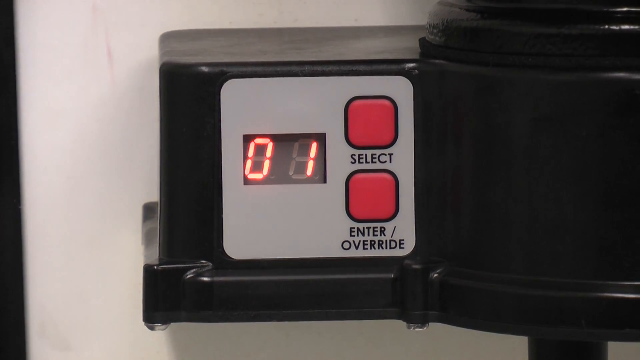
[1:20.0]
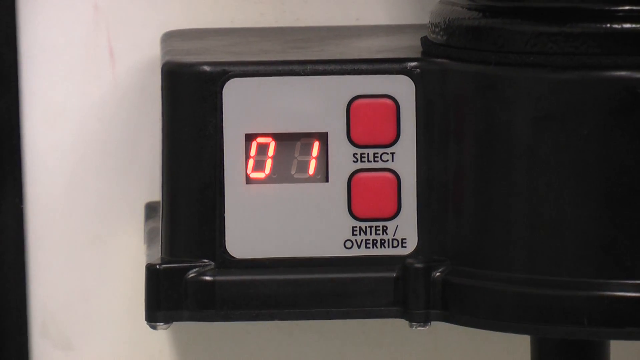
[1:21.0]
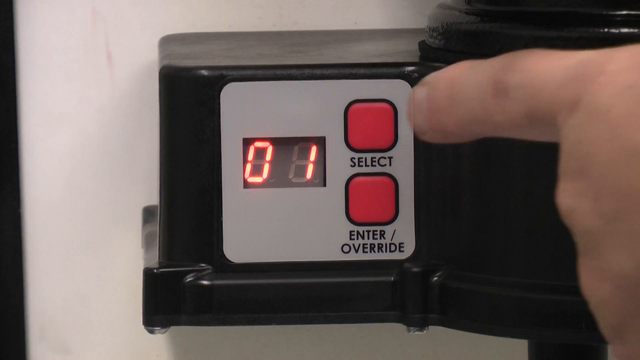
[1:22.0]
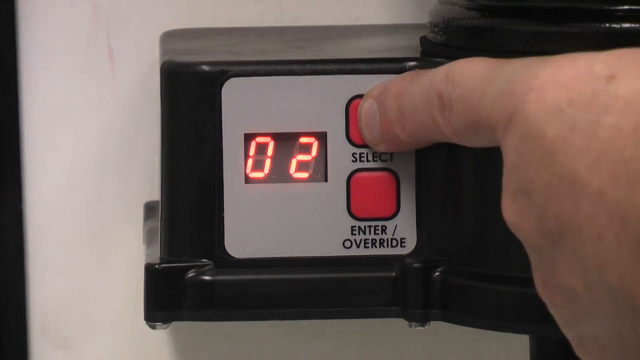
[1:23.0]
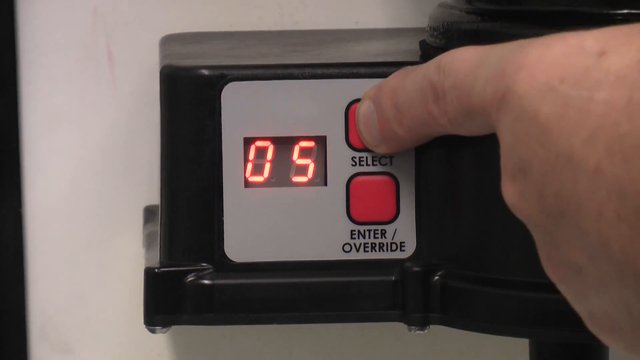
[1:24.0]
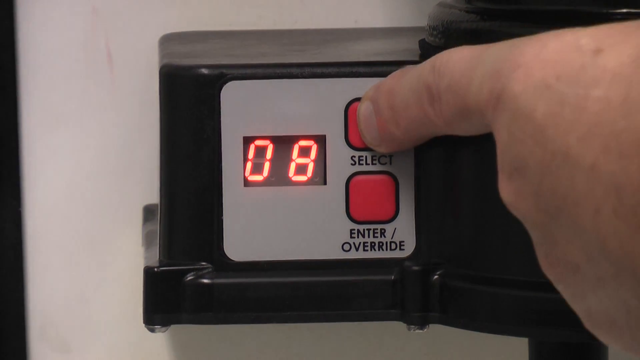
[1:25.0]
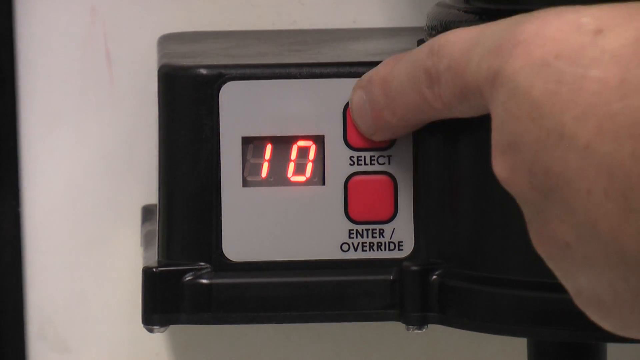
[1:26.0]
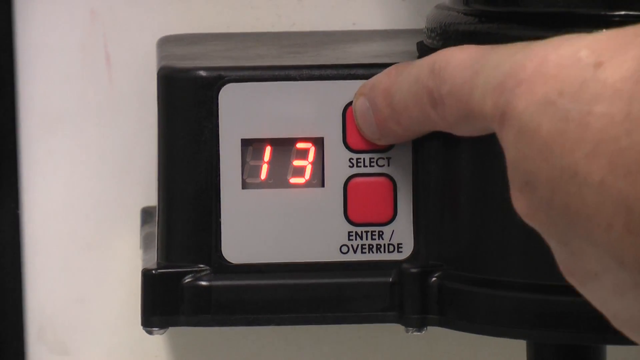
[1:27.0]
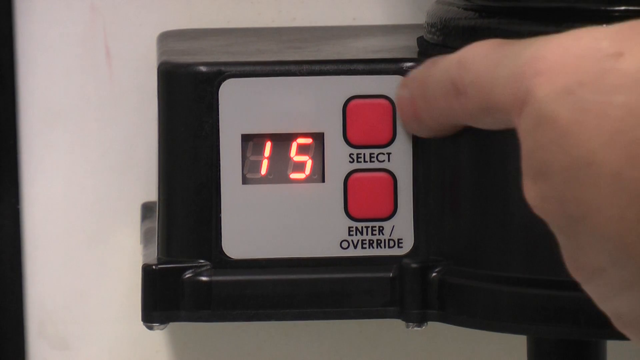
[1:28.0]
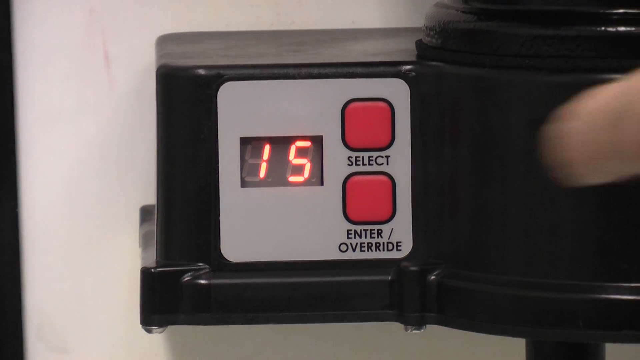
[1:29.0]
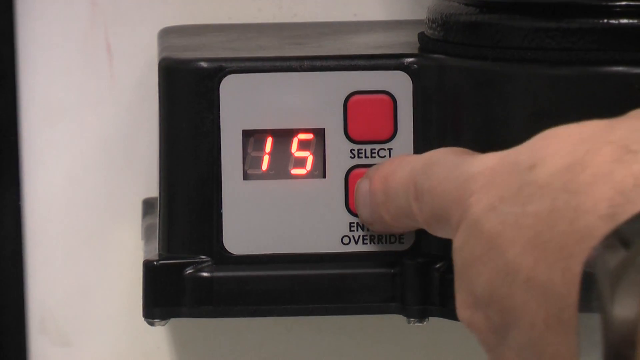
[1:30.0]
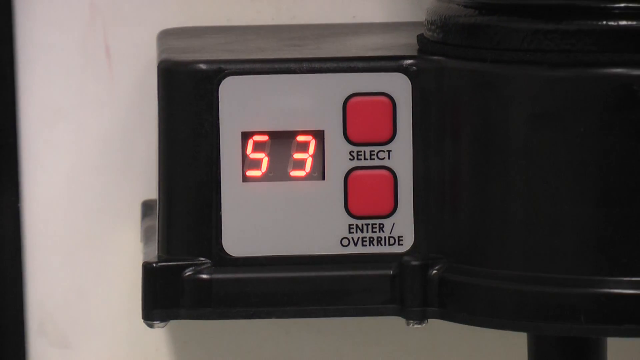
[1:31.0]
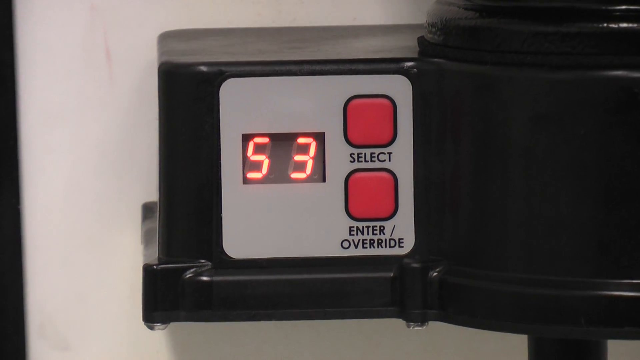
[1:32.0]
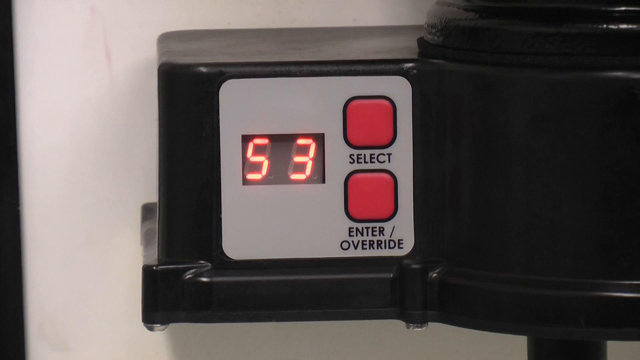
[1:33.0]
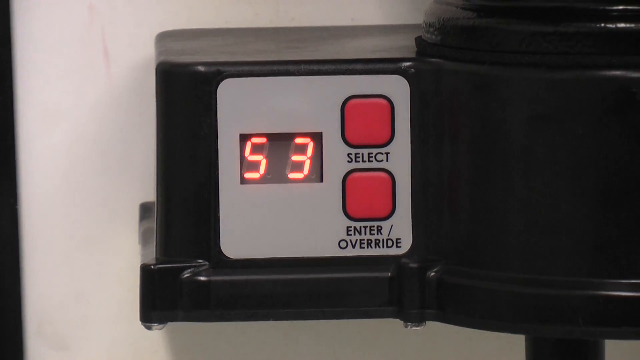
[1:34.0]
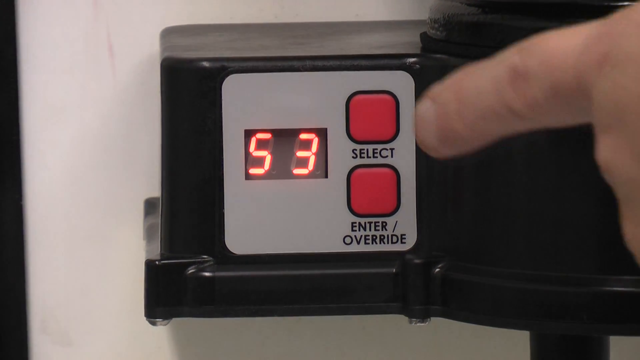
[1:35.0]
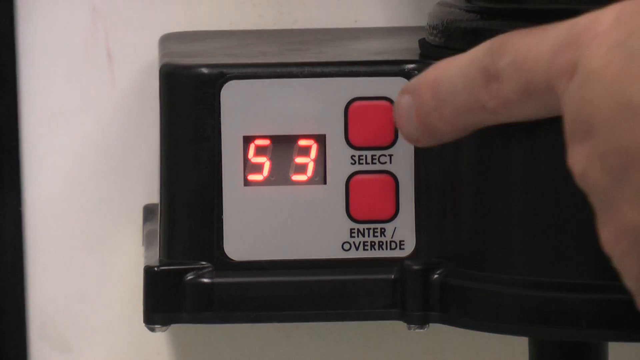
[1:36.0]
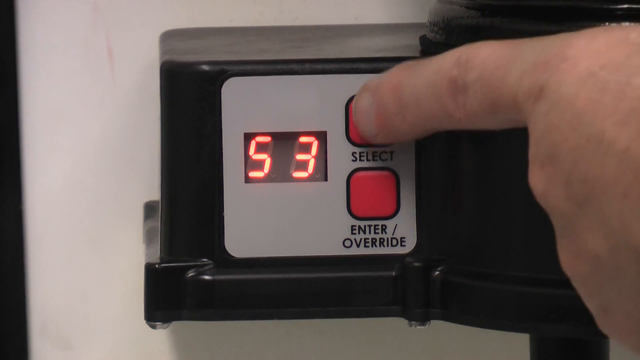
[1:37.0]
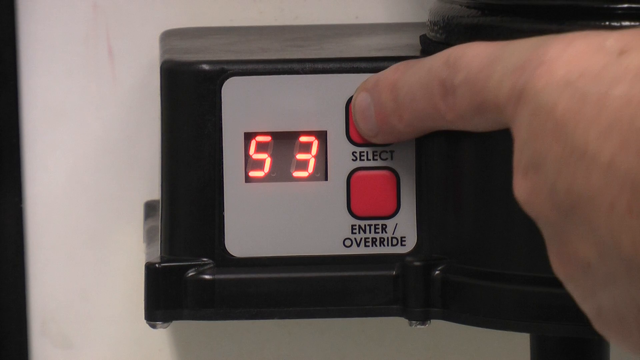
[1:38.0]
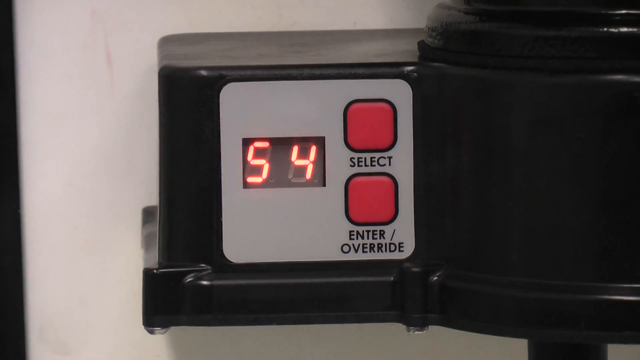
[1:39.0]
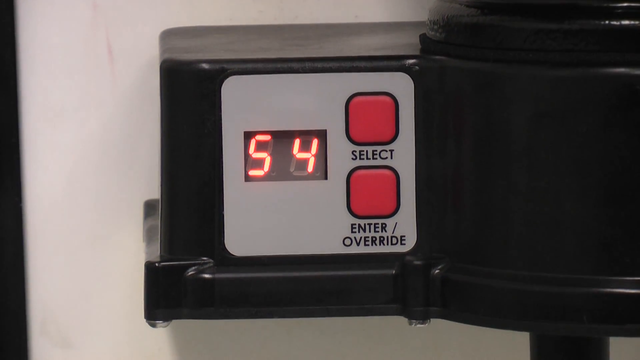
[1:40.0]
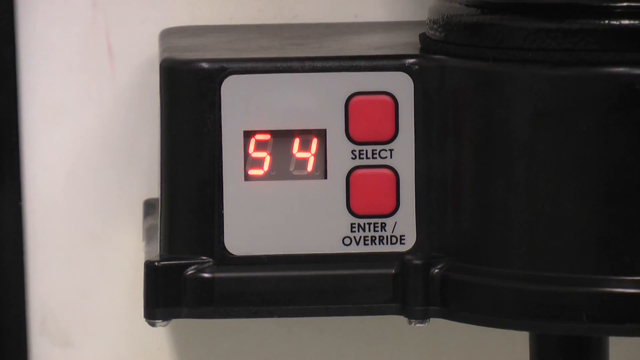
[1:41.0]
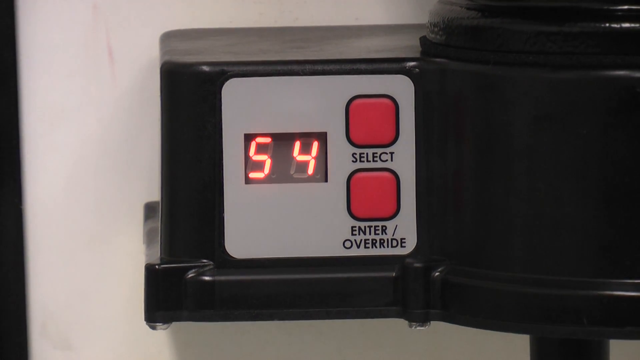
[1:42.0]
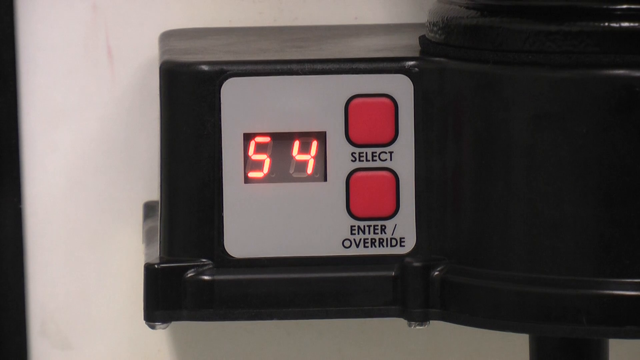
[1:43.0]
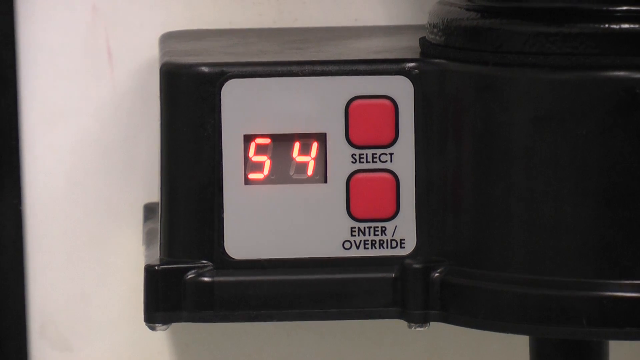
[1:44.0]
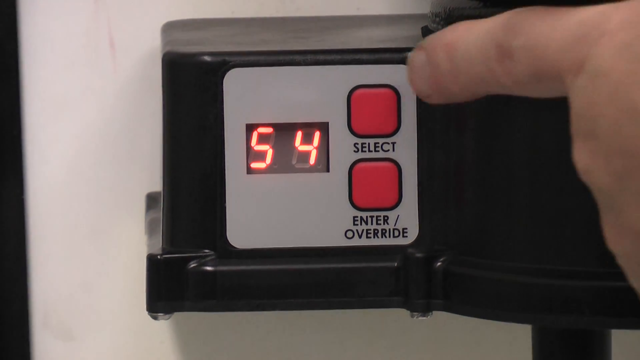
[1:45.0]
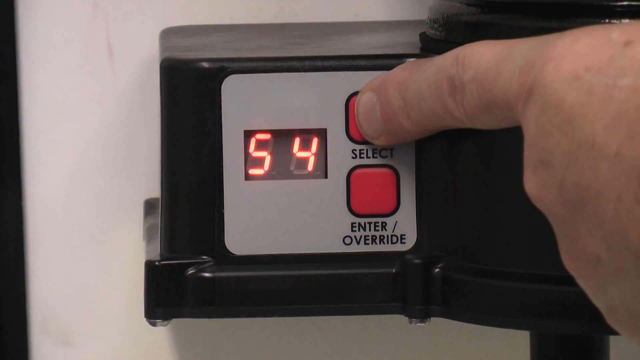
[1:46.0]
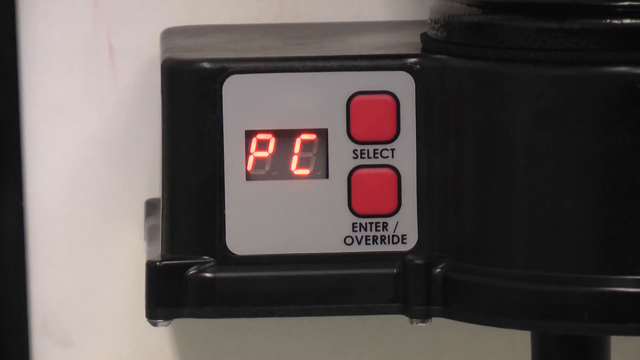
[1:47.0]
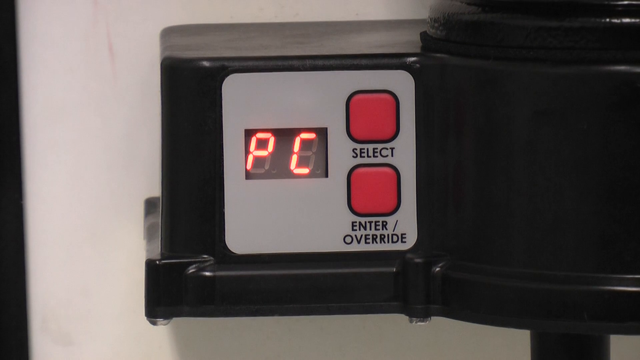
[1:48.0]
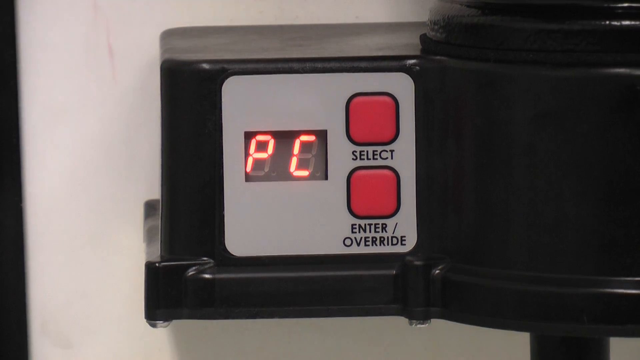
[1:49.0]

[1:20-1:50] The machine has two buttons, one labeled "select" and below it one labeled "enter/override," and the number 101 is flashing on the screen. A hand comes into the frame and presses the select button multiple times, going through 13, 14 and 15, and it stays on 15. The hand then presses the enter/override button and the display goes to 53. Pressing select again changes it to 54. The hand returns and presses select again, and the display reads "PC".